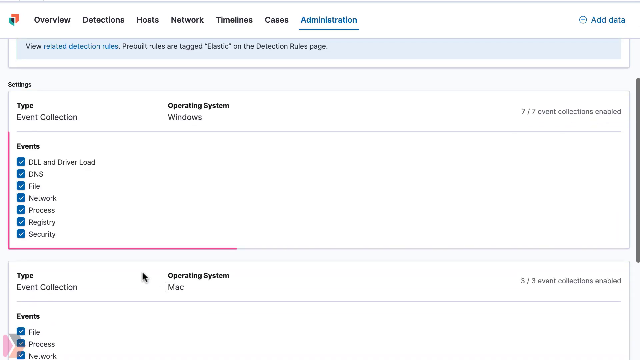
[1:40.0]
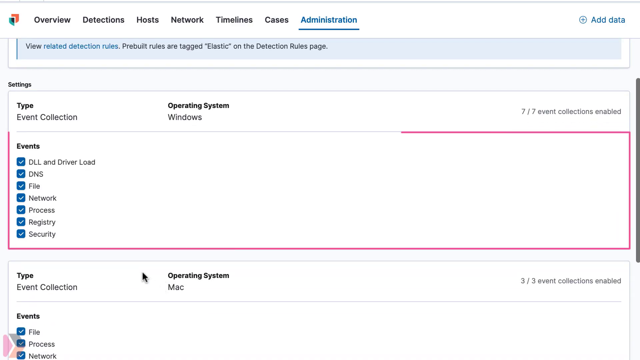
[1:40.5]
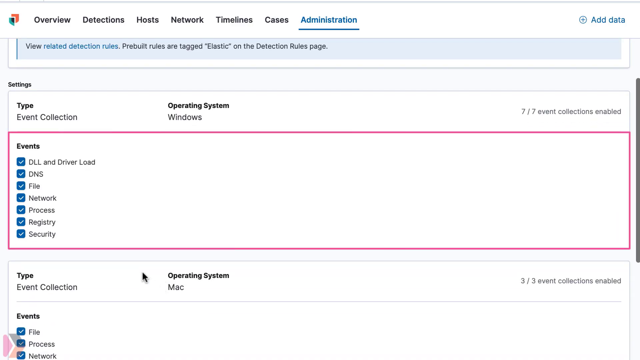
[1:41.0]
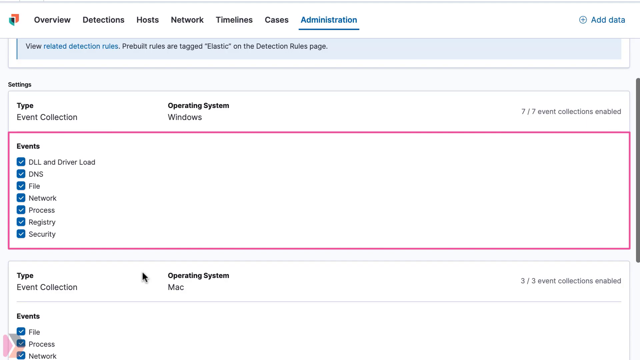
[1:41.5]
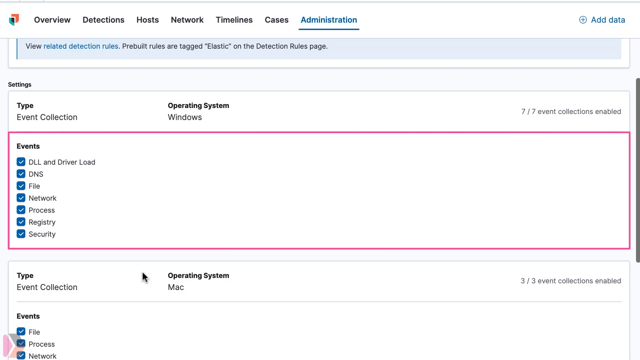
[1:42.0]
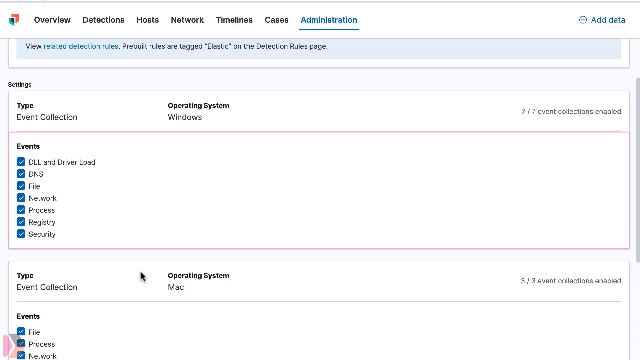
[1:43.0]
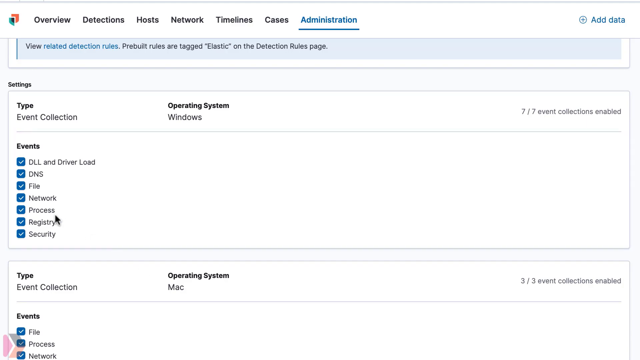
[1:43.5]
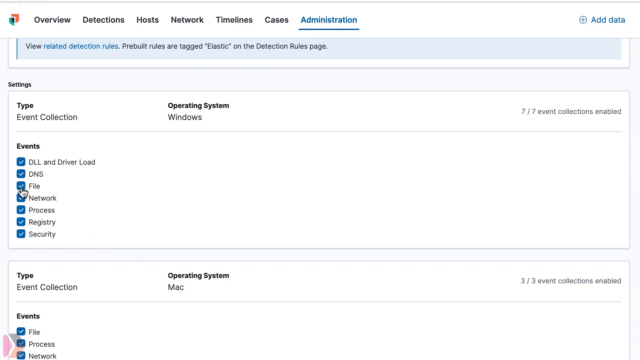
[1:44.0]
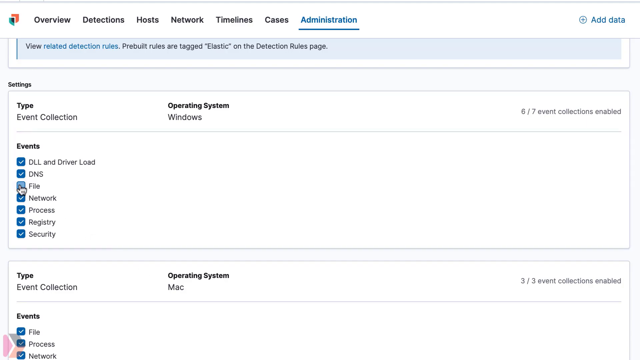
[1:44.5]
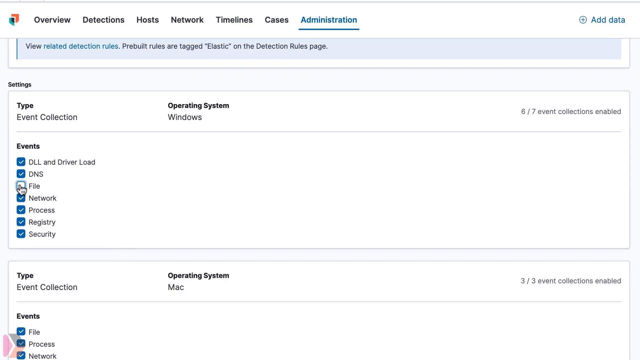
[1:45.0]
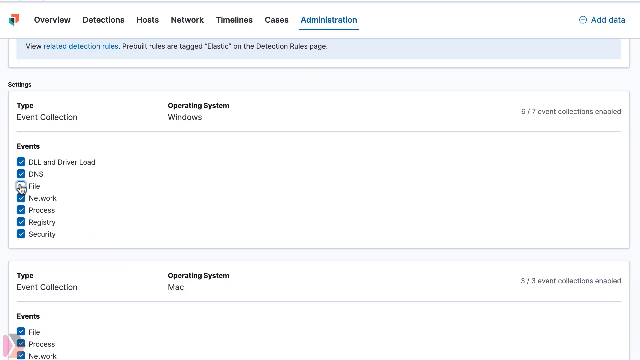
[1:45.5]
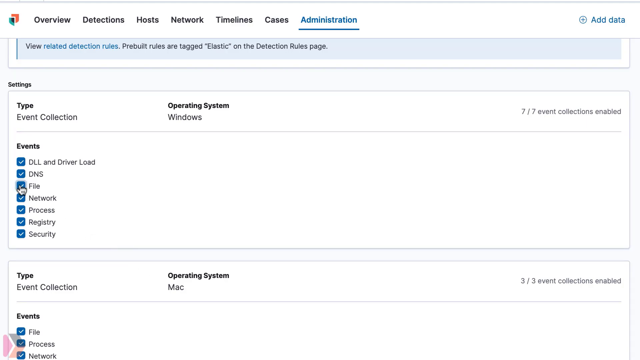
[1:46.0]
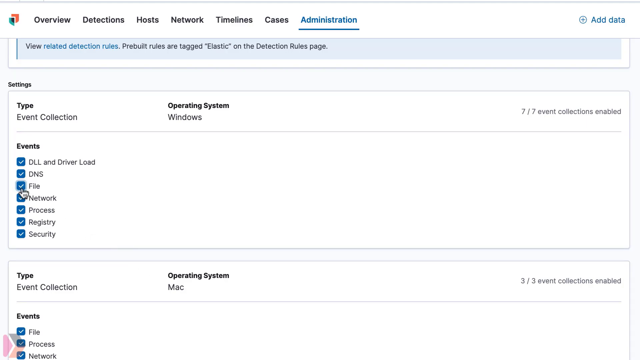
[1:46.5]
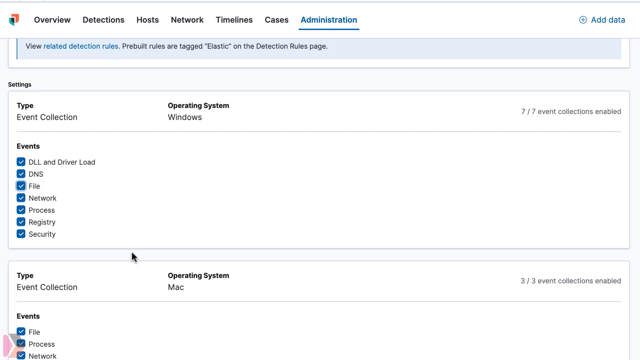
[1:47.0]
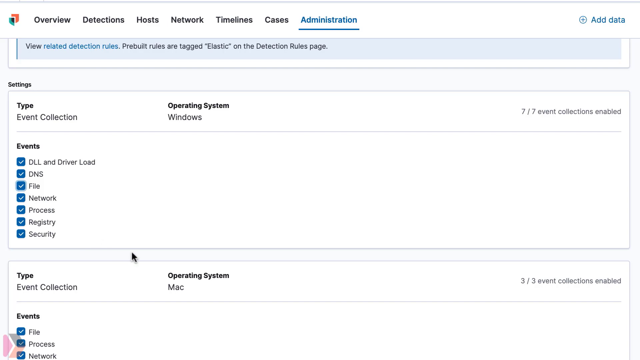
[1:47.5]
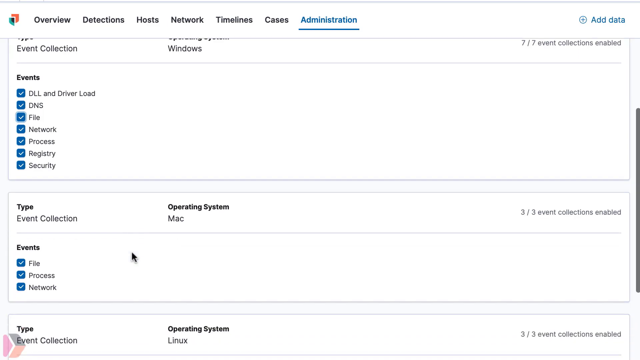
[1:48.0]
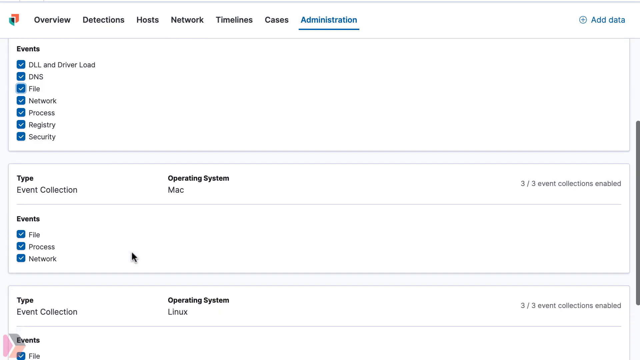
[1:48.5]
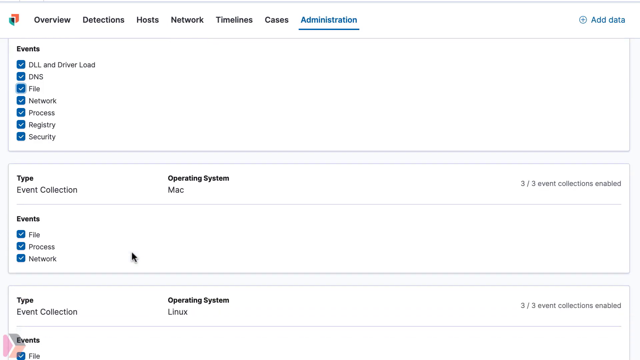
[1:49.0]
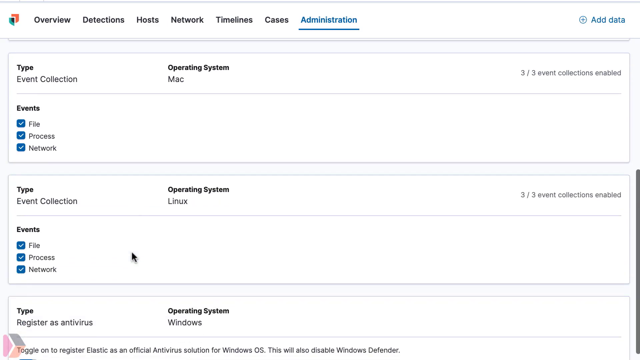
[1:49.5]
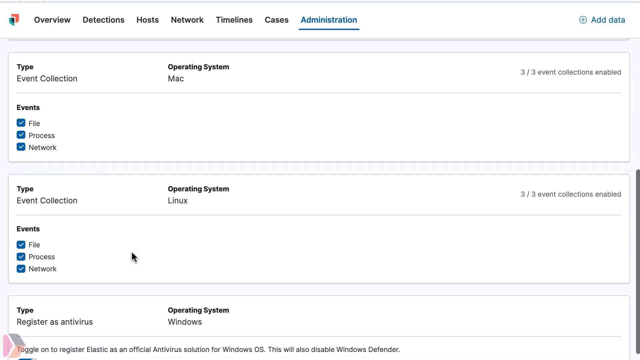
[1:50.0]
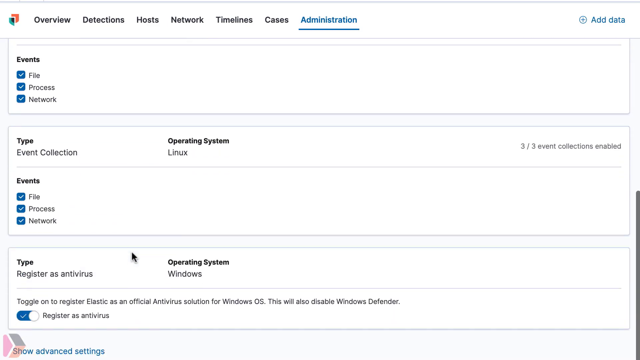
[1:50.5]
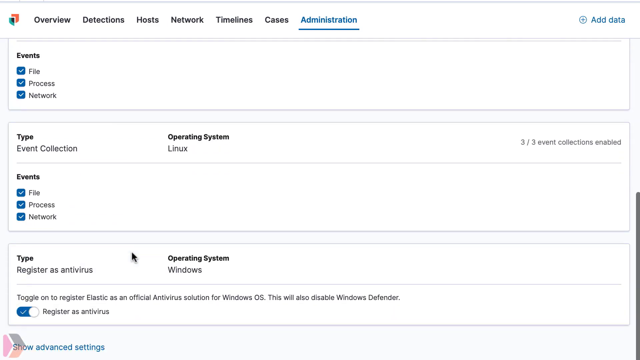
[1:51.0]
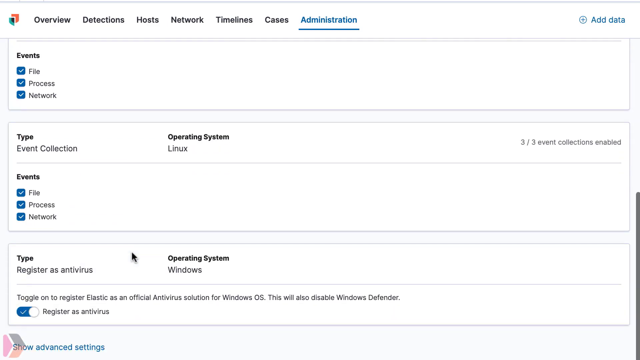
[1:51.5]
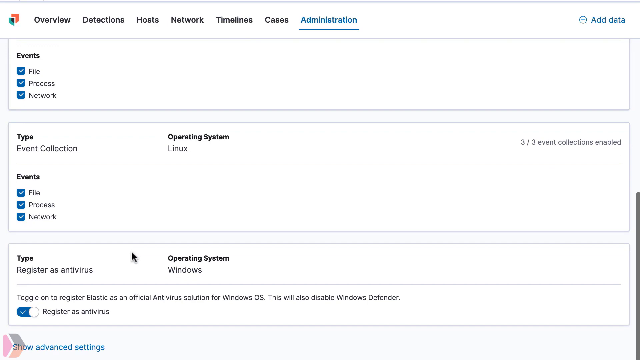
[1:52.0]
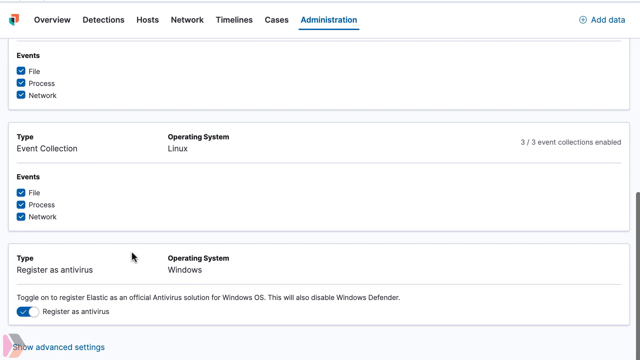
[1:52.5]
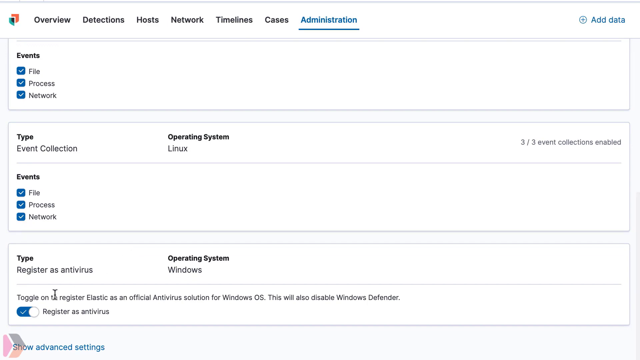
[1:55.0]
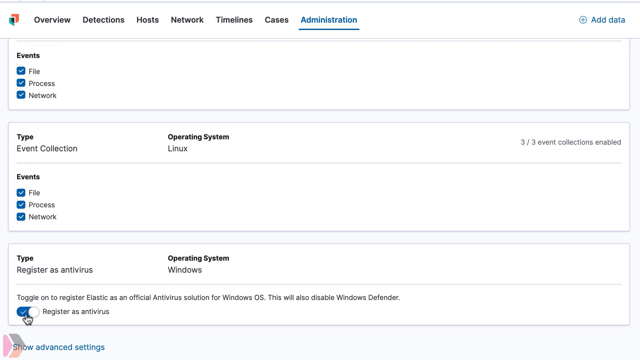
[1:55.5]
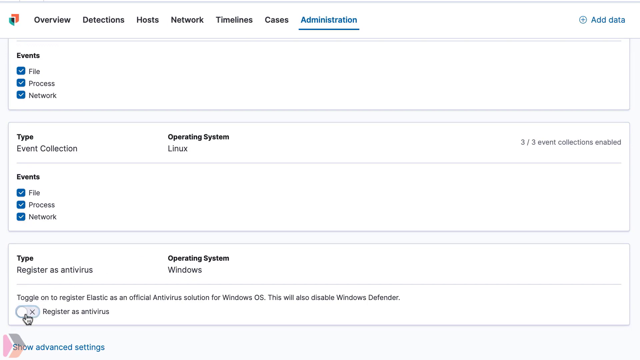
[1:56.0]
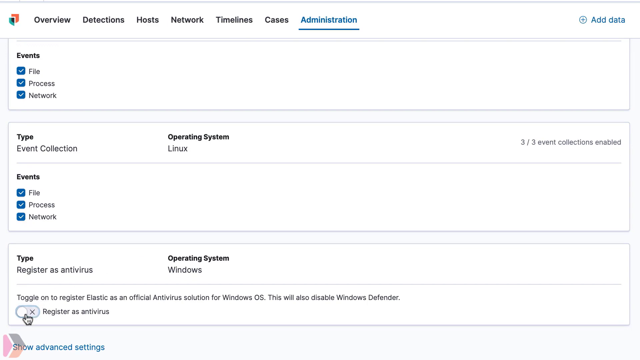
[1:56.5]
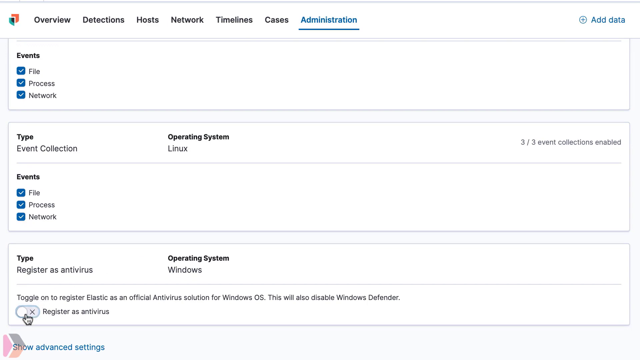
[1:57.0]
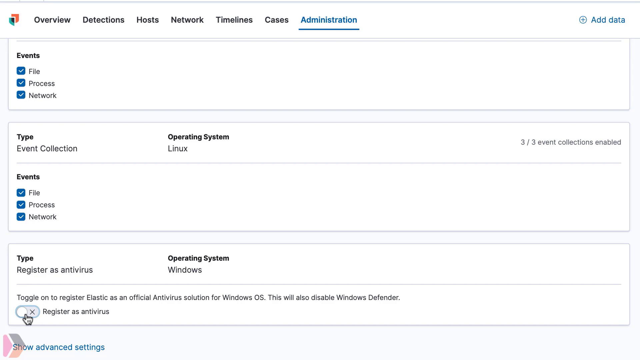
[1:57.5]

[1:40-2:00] On the left of the computer screen, an area under administration is highlighted with a pink line around it, listing events vertically: DLL and driver level, DNS, file, network, process, registry and security. Each has a blue square beside it with a white check in it. File is clicked, then clicked again to reactivate it. Further down, under events, are file, process and network, each with the blue box and white check. This section reads type event collection, operating system Mac, three of three event collections enabled. Below is another box reading type event collection, operating system Linux, three of three event collections enabled; the enabled event collections are file, process and network. Scrolling further down shows type registry as antivirus, operating system Windows.